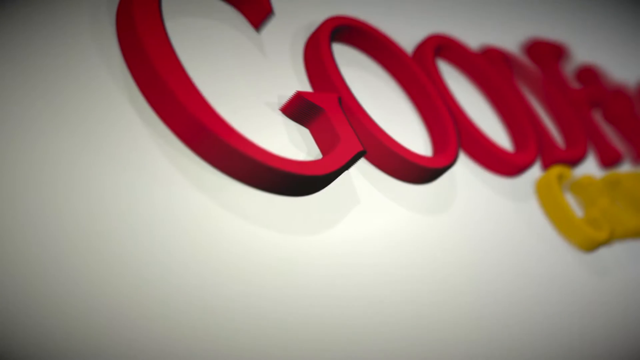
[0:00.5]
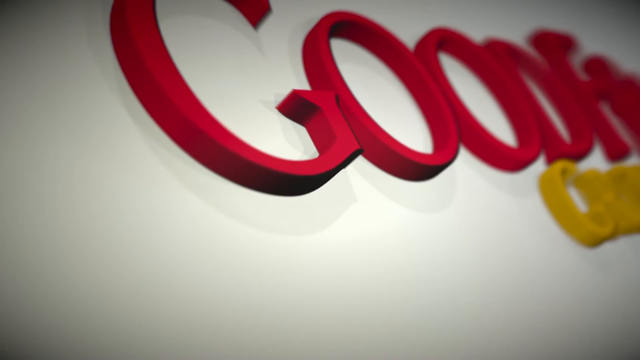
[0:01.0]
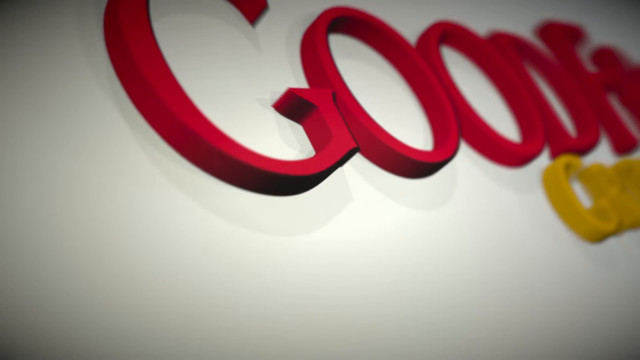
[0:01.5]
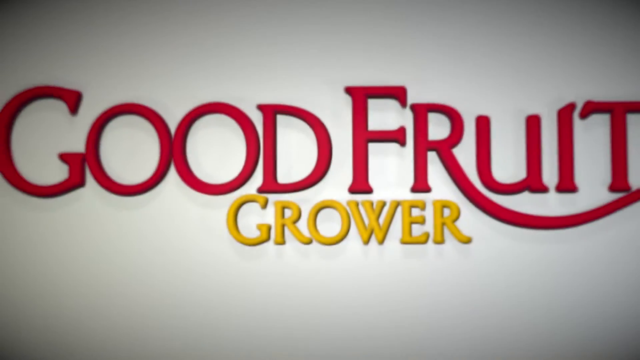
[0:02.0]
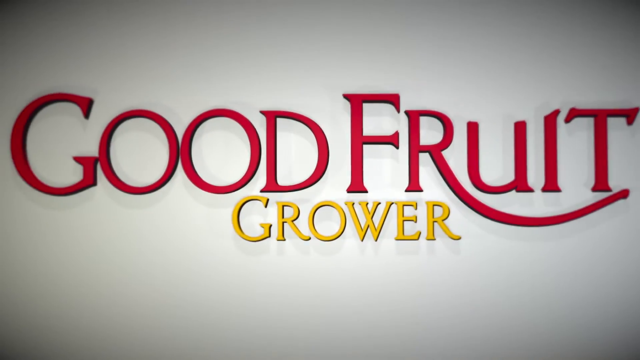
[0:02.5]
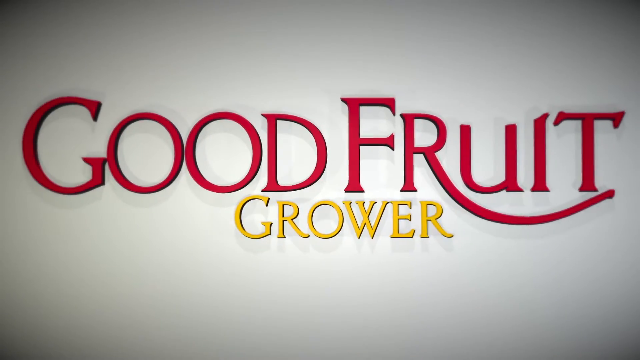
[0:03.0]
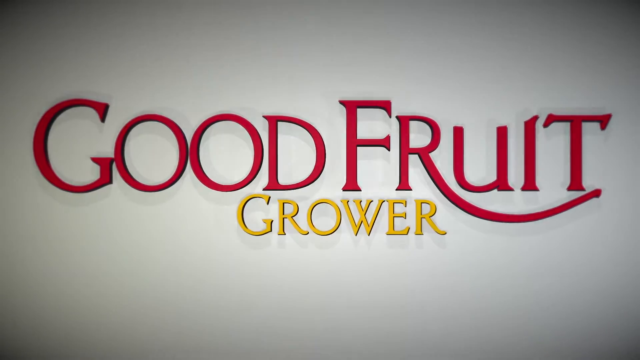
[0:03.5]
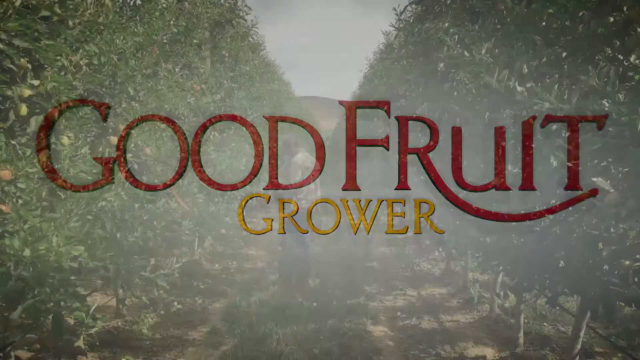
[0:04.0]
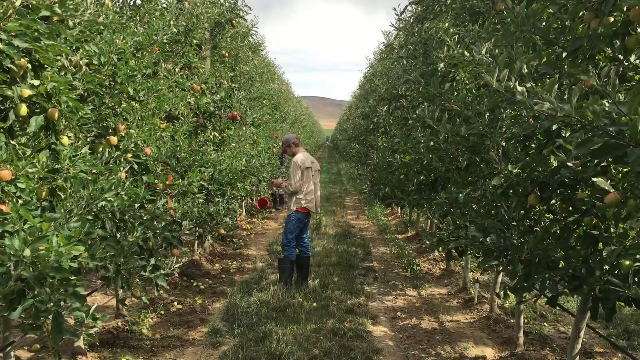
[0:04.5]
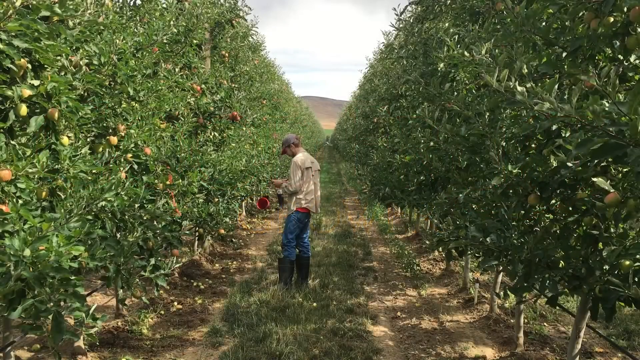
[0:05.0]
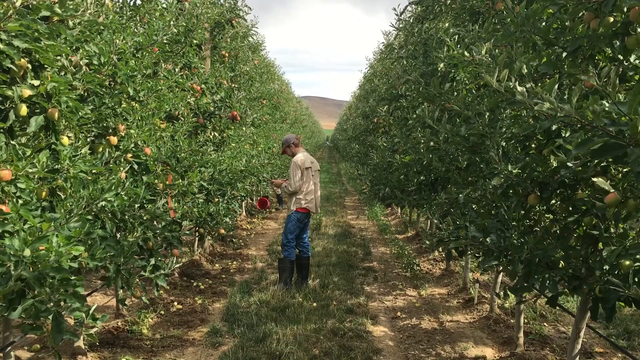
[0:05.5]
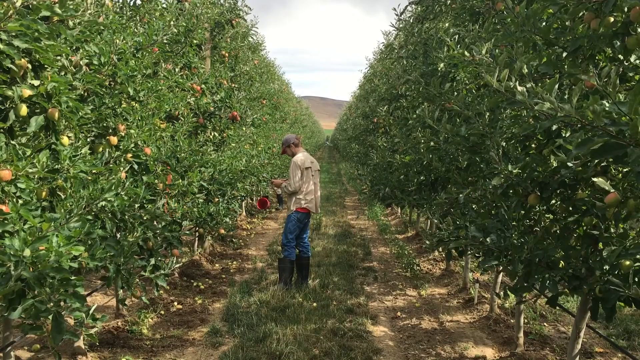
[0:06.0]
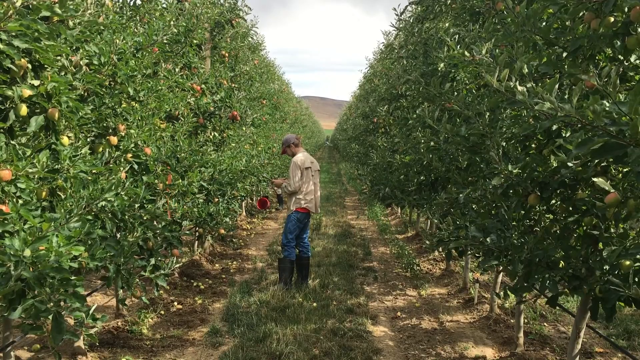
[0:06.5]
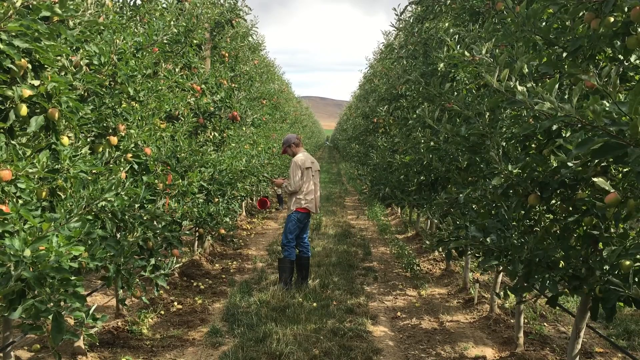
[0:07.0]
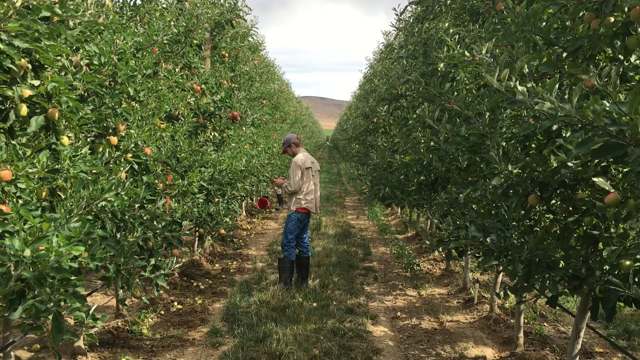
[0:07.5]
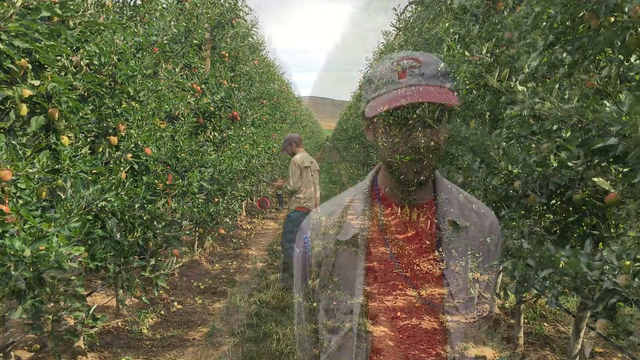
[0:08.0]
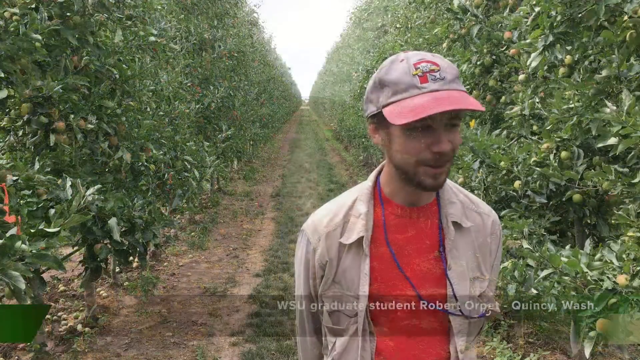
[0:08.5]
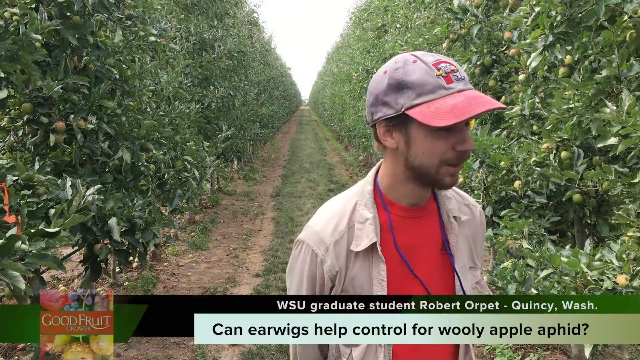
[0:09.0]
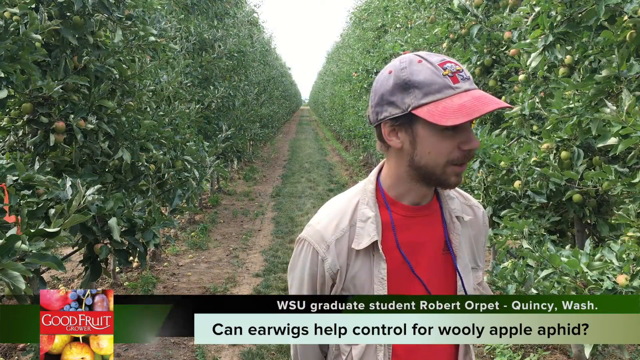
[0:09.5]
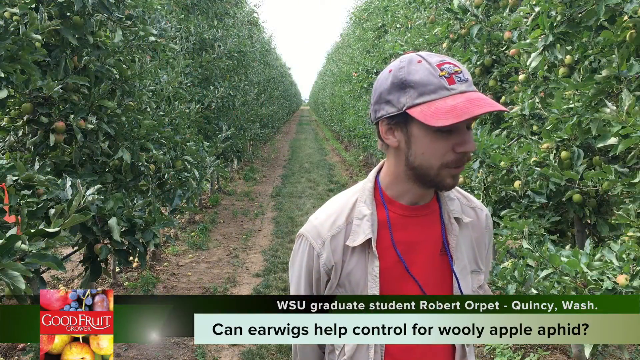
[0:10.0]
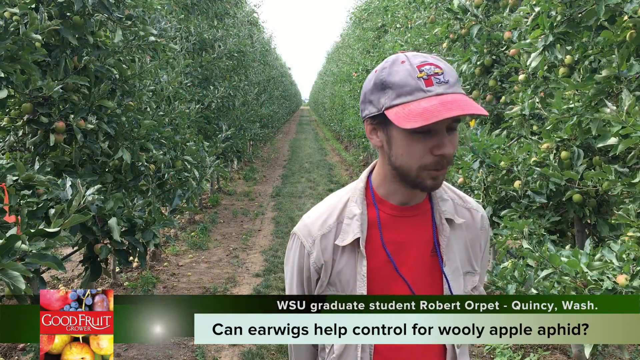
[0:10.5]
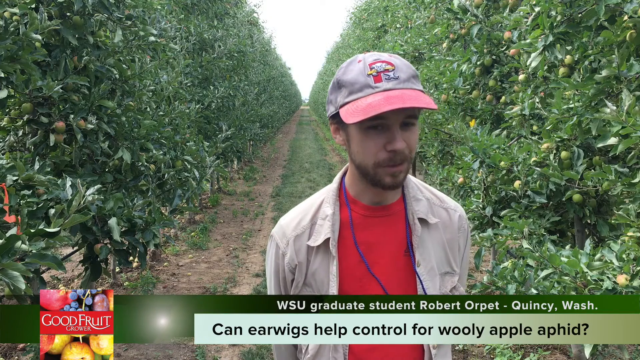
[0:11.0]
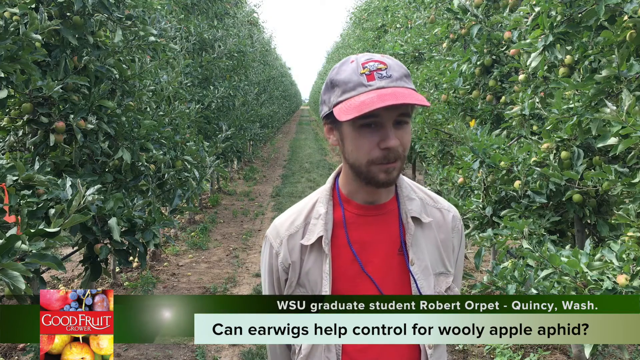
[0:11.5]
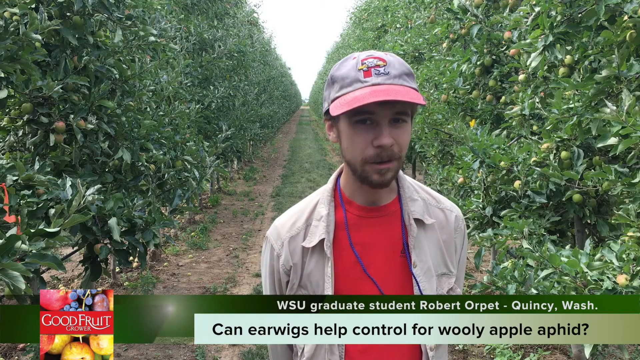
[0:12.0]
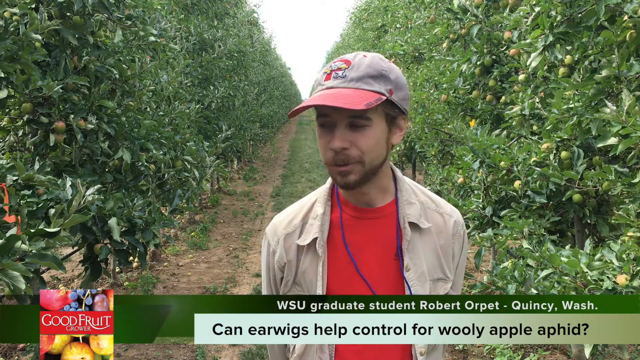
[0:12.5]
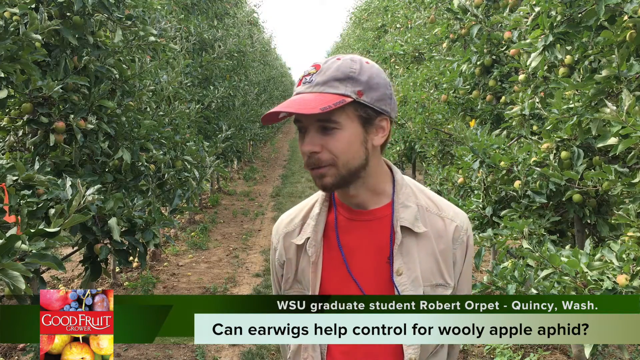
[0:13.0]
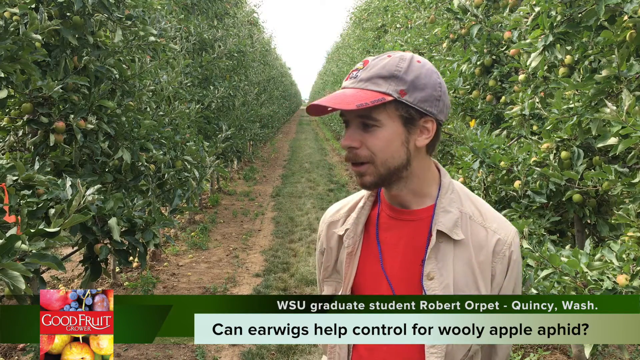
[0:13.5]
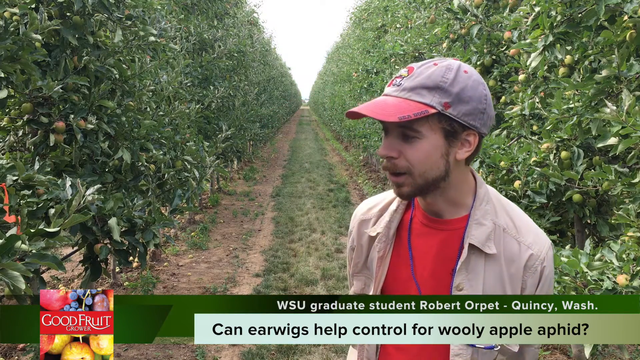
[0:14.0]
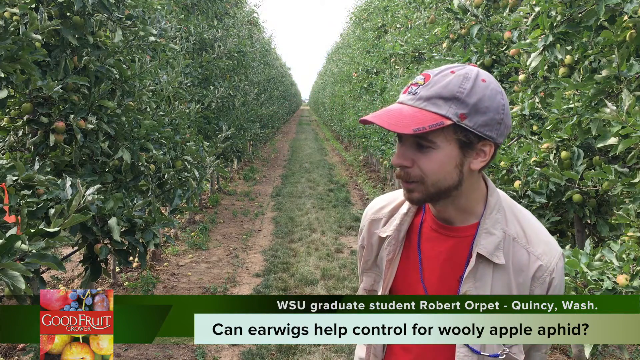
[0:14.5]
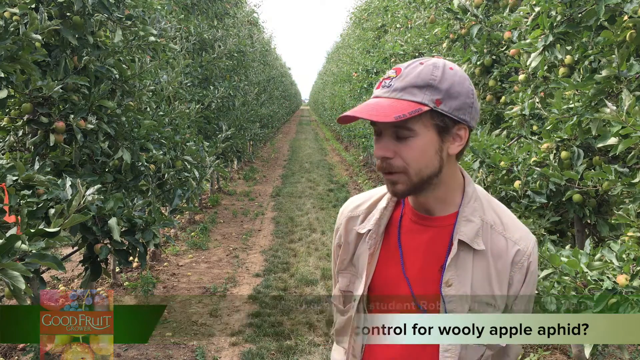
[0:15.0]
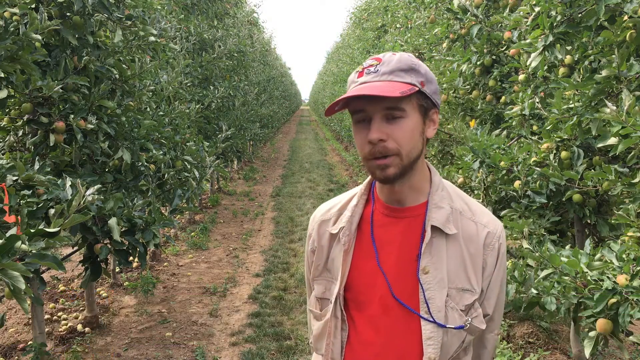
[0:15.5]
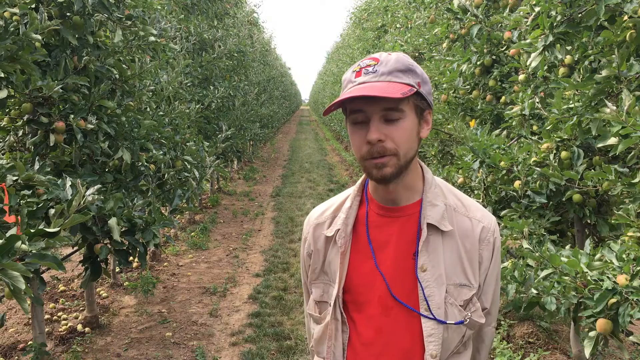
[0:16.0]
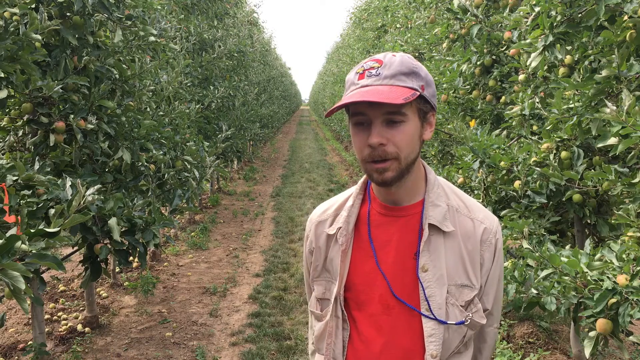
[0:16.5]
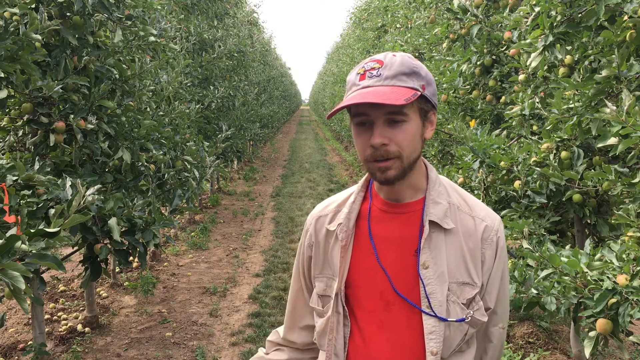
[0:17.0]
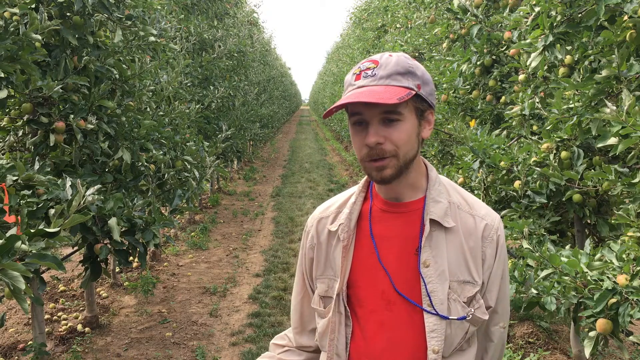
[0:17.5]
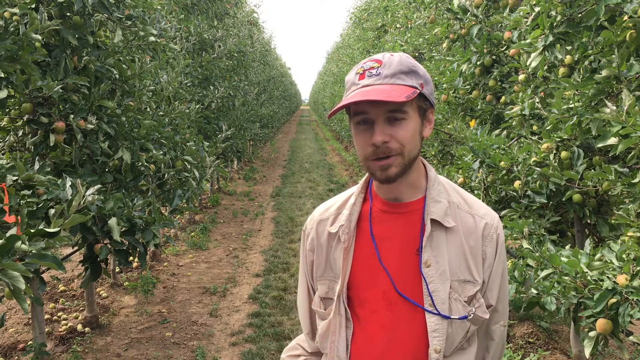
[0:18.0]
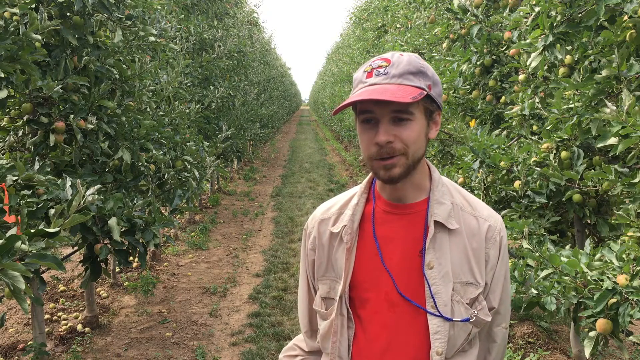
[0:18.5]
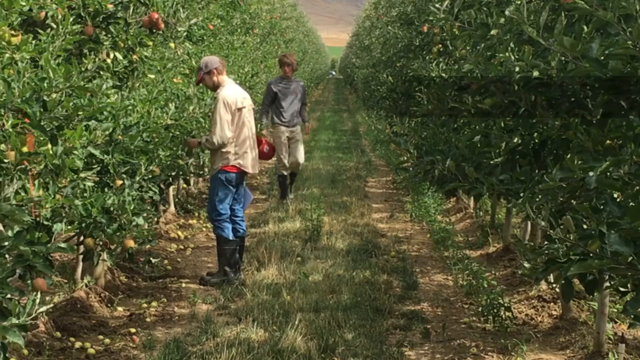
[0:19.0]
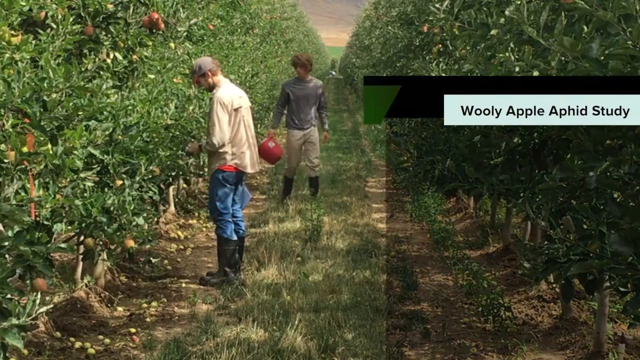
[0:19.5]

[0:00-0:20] The video fades in from a black screen to a close-up of a logo against a white background, starting at the far left of the logo and looking at part of it as it extends off toward the right of the screen. A cut to another shot pulls back to reveal that the logo says "Good Fruit" in red, with "Grower" written underneath in yellow. The camera zooms out from the logo as it fades into a shot set in an orchard between rows of growing trees. The view is directly between two rows of trees, which shrink into the distance, with a hill behind them and a small section of sky above. Standing between the two rows is a man facing left, wearing a light-coloured jacket, blue jeans, green wellington boots and a baseball cap; he is holding something in his hand in front of him and looking down at it. The shot fades to the same man standing close to the camera, seen from his chest up to above his head, slightly right of centre between two rows of trees. He wears a red t-shirt with a tan-coloured shirt on top and a tan baseball cap with a red brim; he is white and has a brown beard. A dark green graphic appears horizontally across the bottom of the screen with white writing that says 'WSU graduate student Robert Orpett - Quincy, Wash'. Below that, in black on a white rectangular section, is 'Can earwigs help control for wooly apple aphid?', and in the bottom left corner is the Good Fruit Grower logo over a square illustration of different fruits. The man talks as if being interviewed or delivering a speech, moving around on the spot nervously from right to left and changing his angle. The video cuts back to the earlier shot of the same man in the middle of two rows of trees, facing the row on the left. He is now joined by another young man further off in the background, who wears a long-sleeved grey sweater, tan trousers and wellington boots, carries a red bucket in his right hand and faces straight toward the camera. A dark section forms on the right-hand side of the screen as a graphic, where black text in a white box says 'Wooly apple aphid study'.